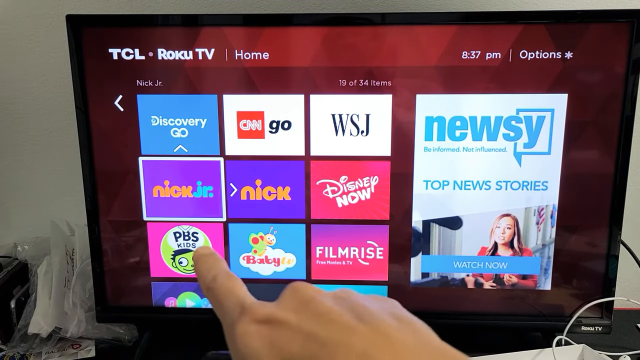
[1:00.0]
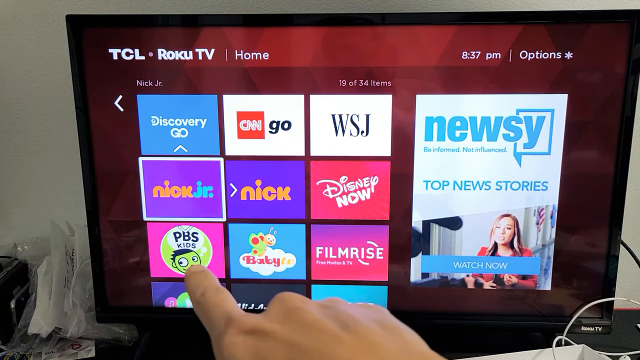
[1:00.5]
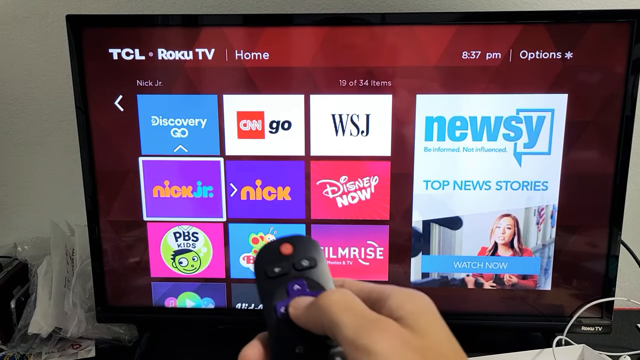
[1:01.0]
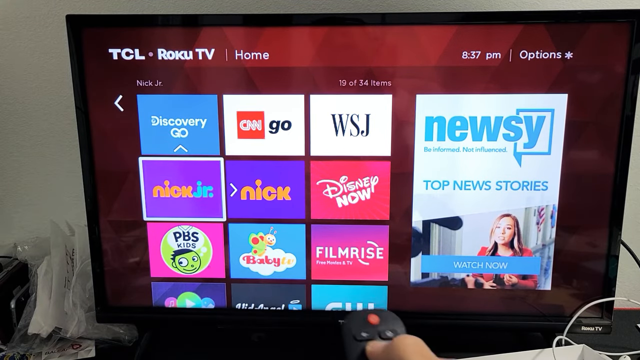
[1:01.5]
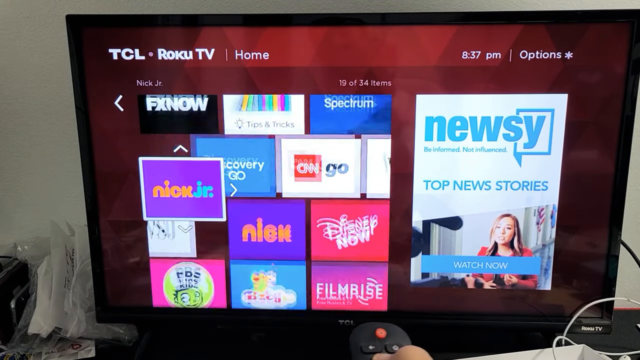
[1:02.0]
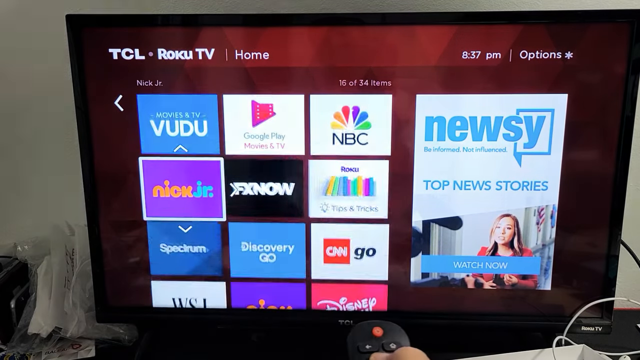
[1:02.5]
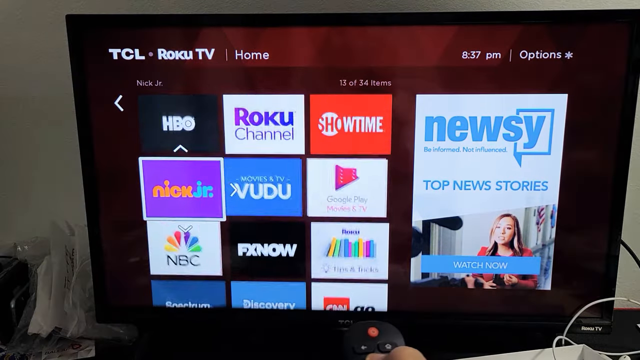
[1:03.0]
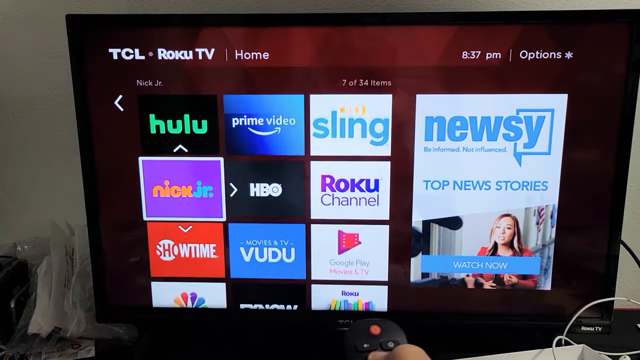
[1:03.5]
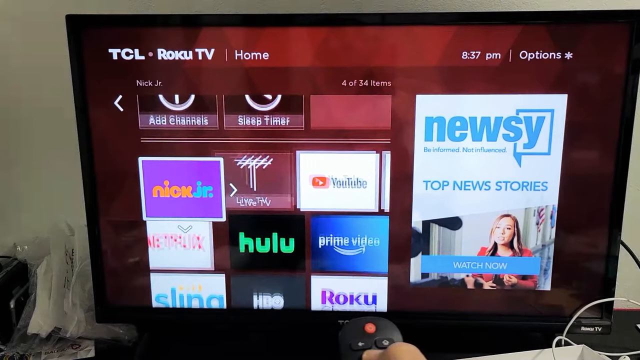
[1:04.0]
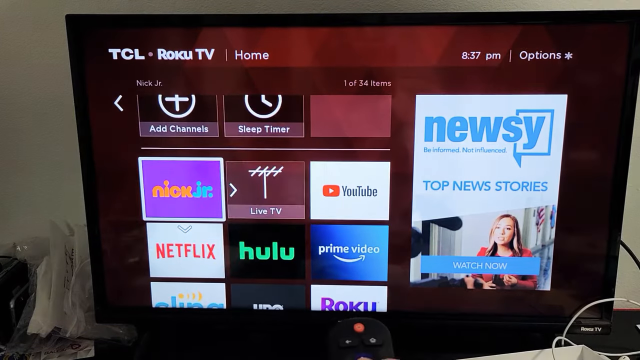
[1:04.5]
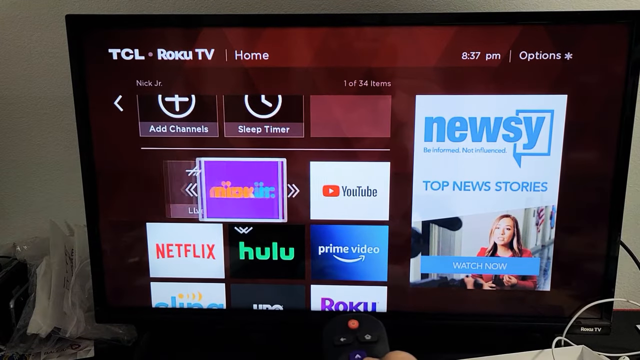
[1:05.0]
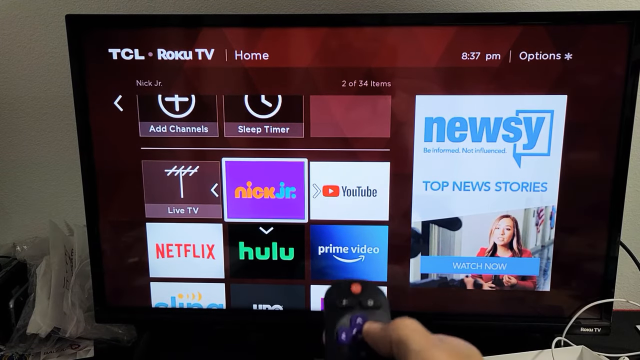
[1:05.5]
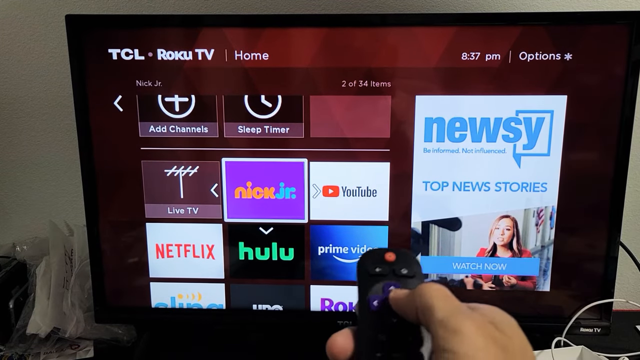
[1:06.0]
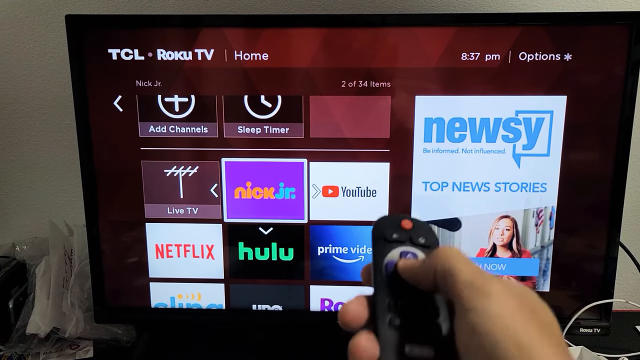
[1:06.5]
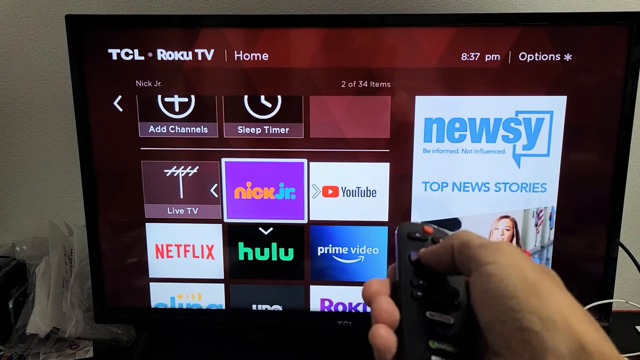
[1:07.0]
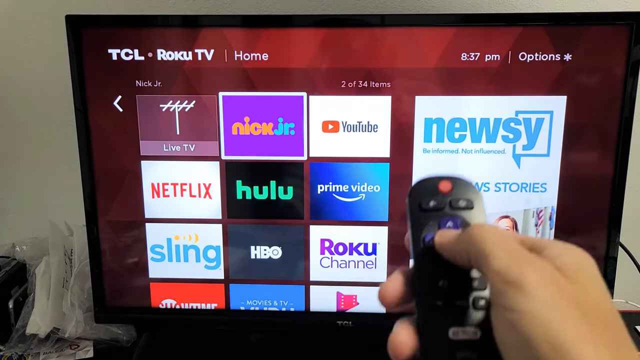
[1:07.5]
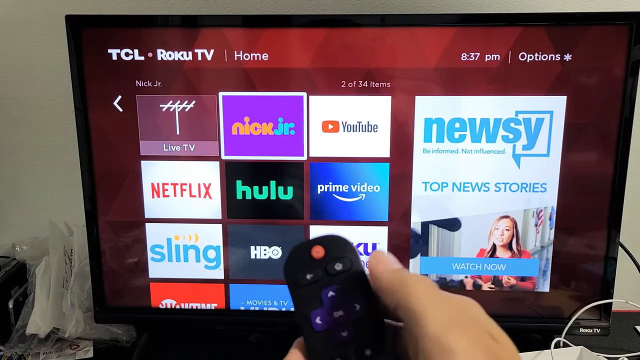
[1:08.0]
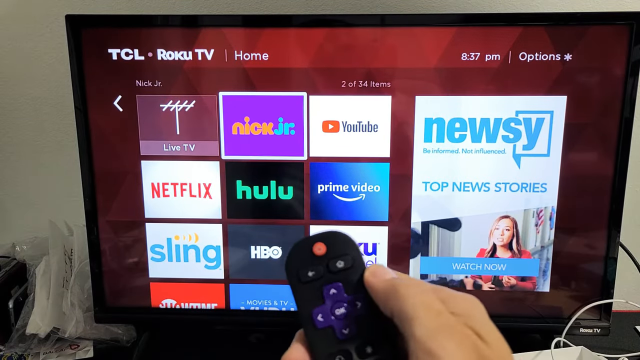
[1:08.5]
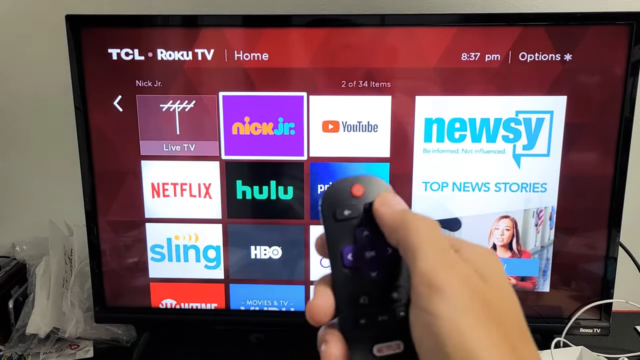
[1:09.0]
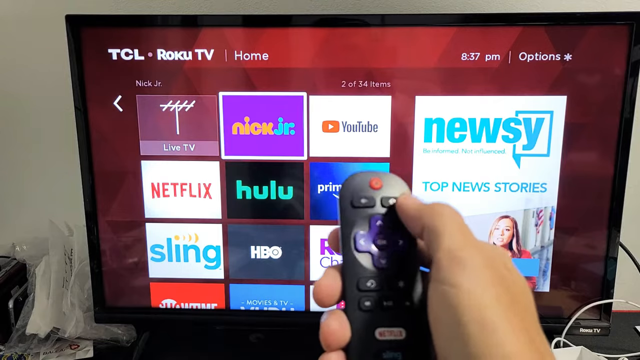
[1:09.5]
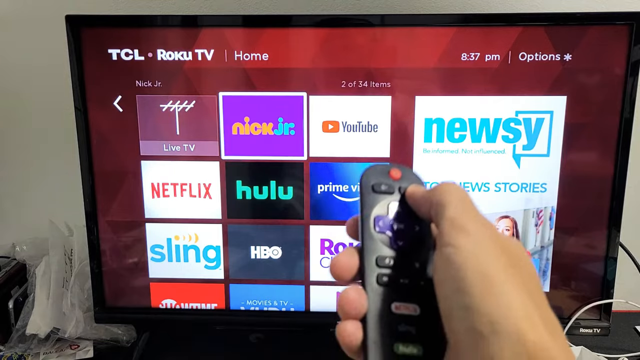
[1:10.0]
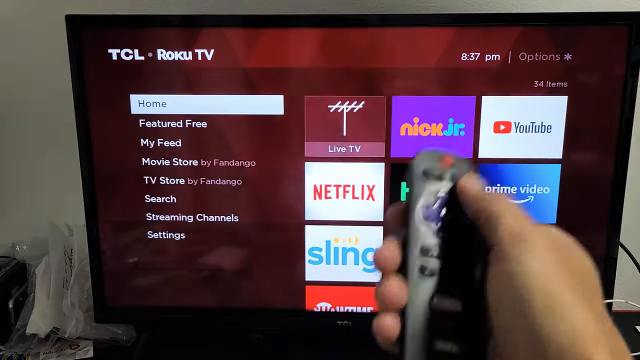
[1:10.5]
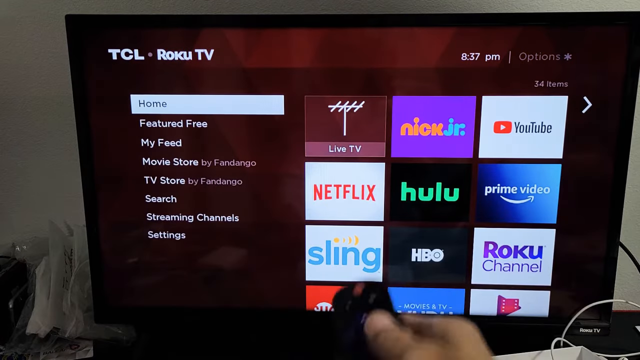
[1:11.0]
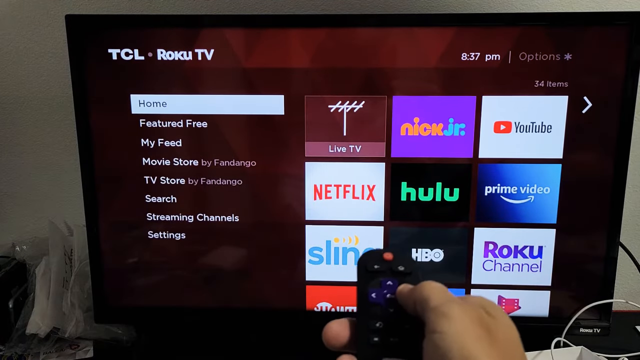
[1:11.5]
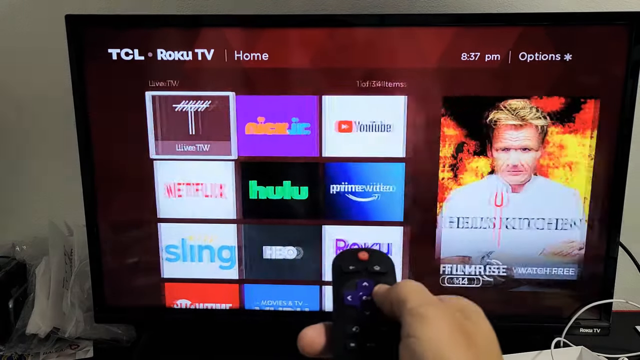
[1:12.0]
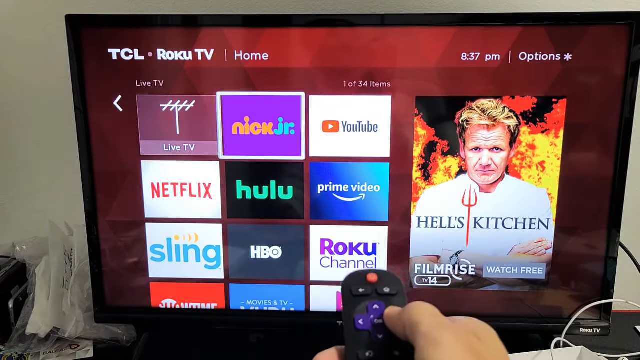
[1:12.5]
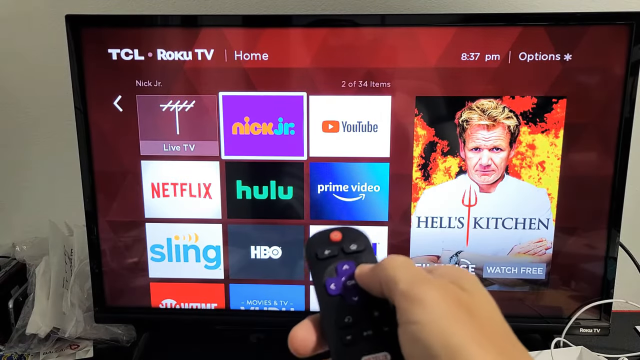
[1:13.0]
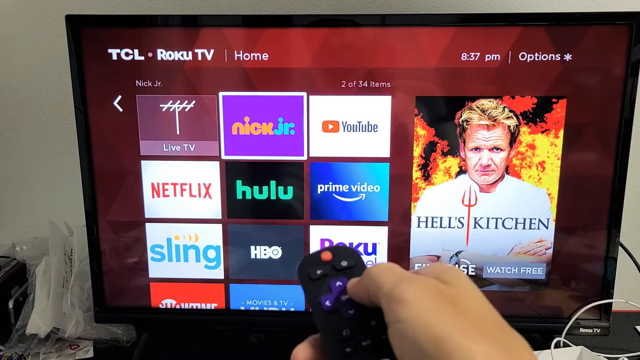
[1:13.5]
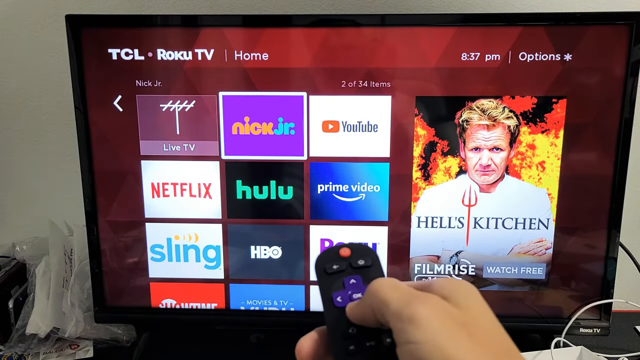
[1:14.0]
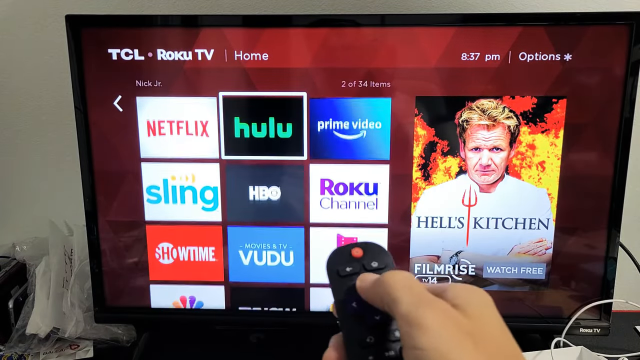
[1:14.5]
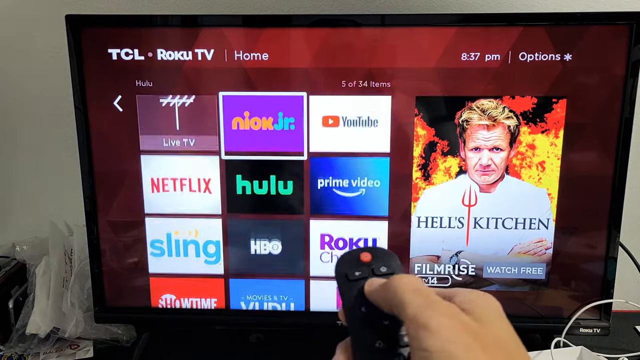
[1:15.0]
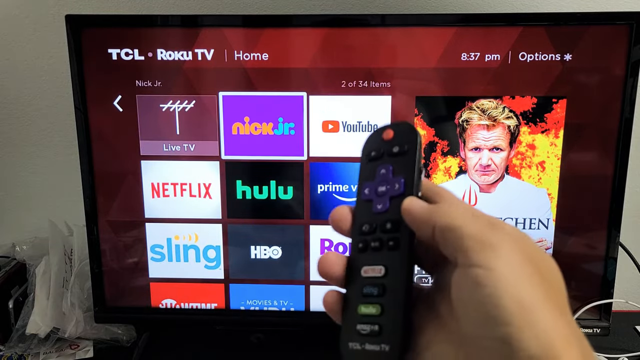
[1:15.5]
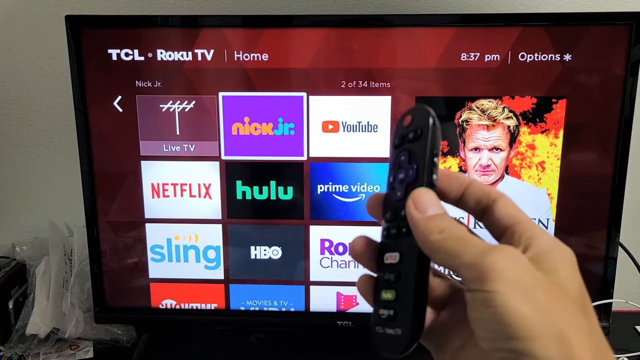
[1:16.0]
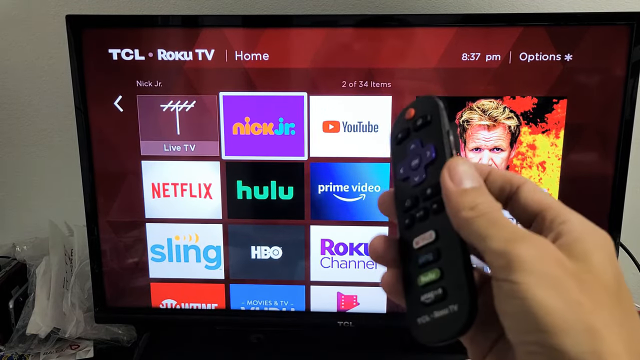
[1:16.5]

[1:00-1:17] The person points to Nick Jr., which has a white box around it as if it has been selected, while the person still holds the remote in their hand. The Nick Jr. app was probably four lines down; an arrow points up to the right and another points down, and the person moves Nick Jr. from its row to the very top. Live TV is now to its right, and Netflix is below it. They move the Nick Jr. app again and it goes to the middle, with live TV on the left and YouTube on the right. They then click OK, and the arrows go away, though the Nick Jr. app still has the white box around it. The person then clicks the Home button and the right button on the remote, goes back to Nick Jr., goes up, down, and back up to Nick Jr. They appear to be showing how to move channels, quickly moving the channel from one spot to another.